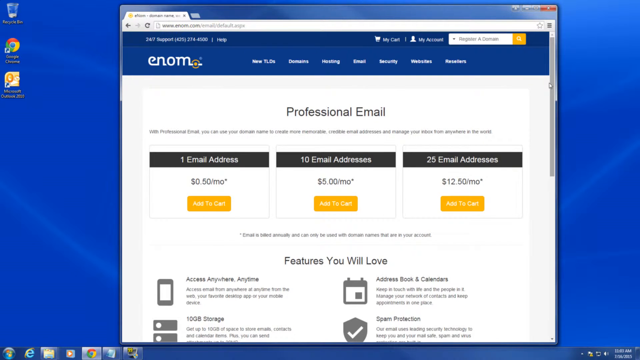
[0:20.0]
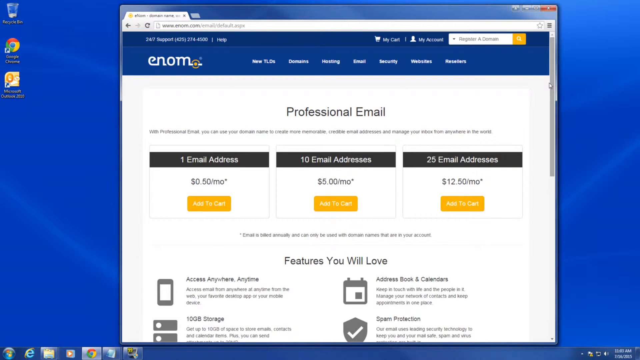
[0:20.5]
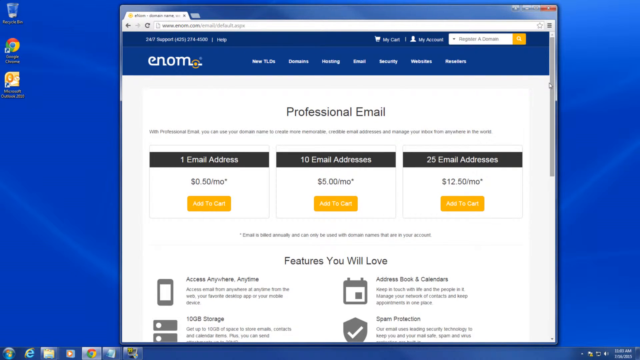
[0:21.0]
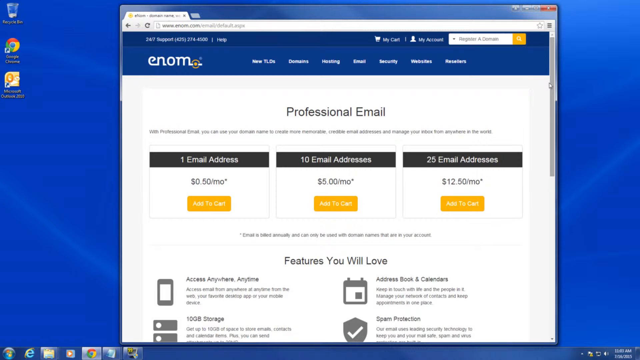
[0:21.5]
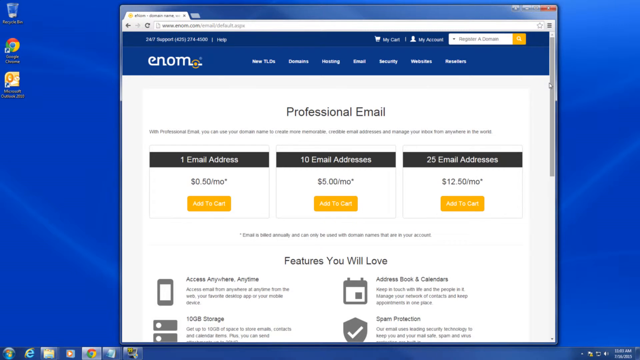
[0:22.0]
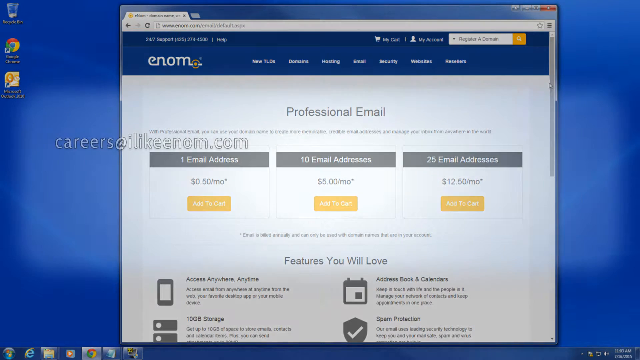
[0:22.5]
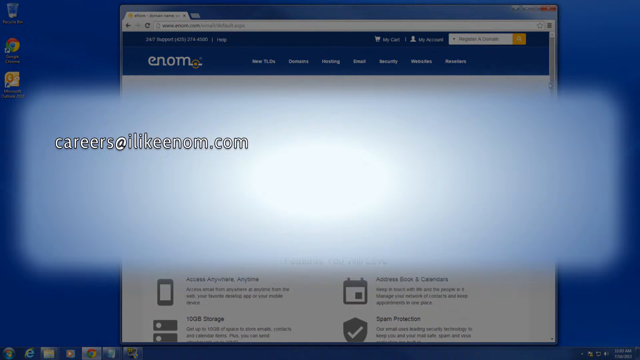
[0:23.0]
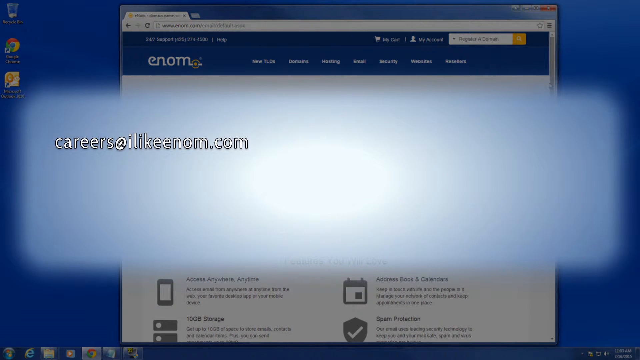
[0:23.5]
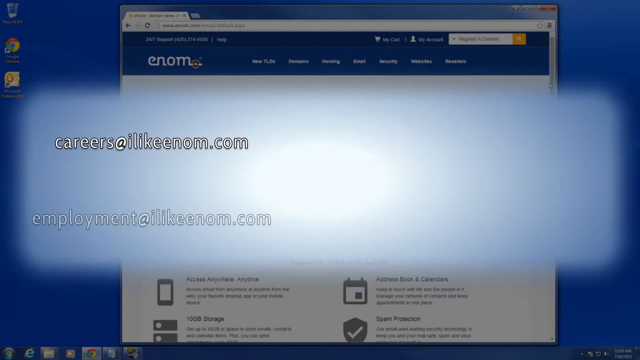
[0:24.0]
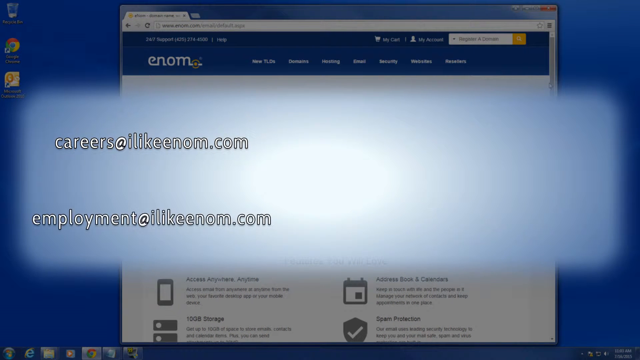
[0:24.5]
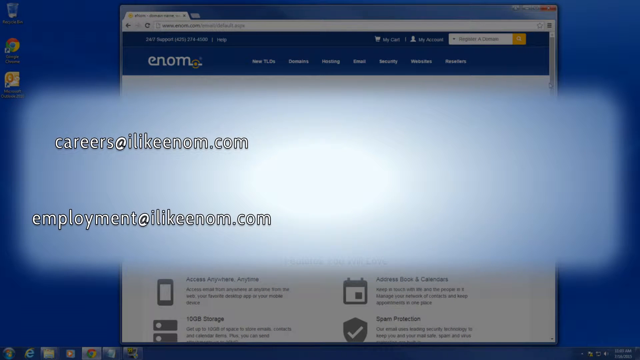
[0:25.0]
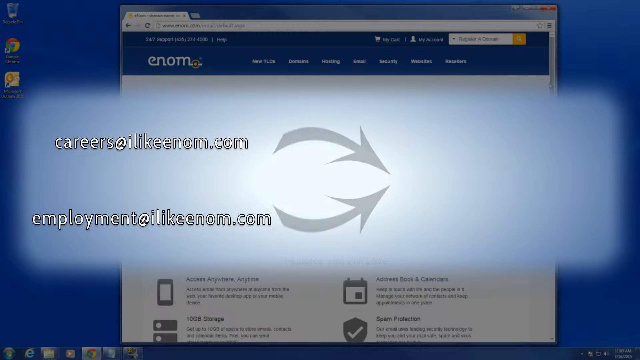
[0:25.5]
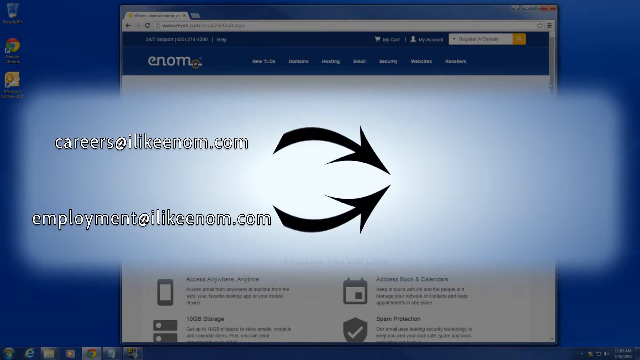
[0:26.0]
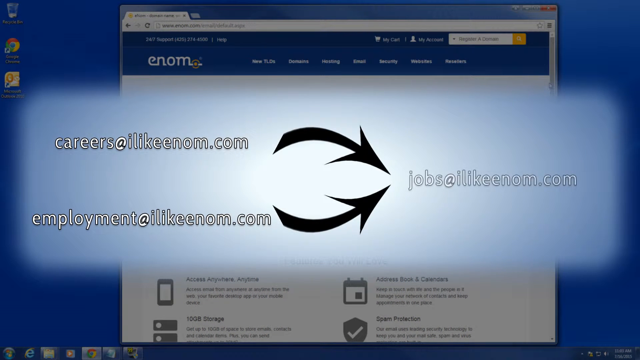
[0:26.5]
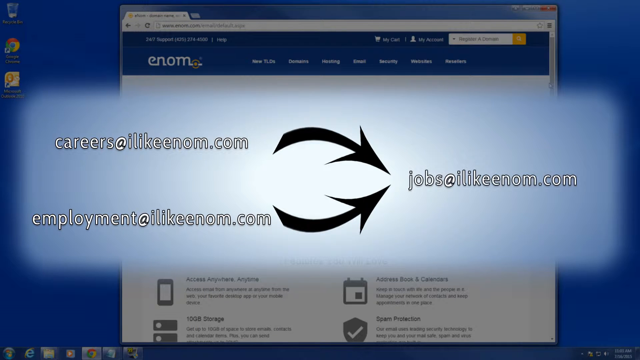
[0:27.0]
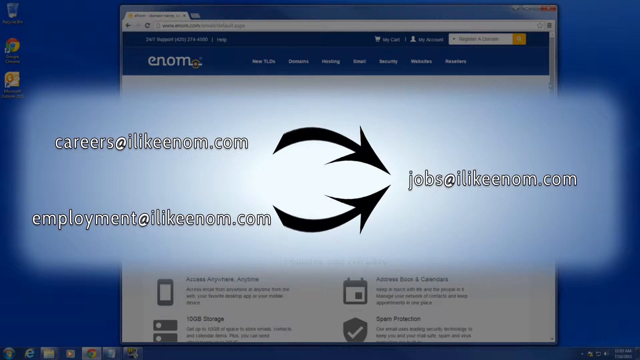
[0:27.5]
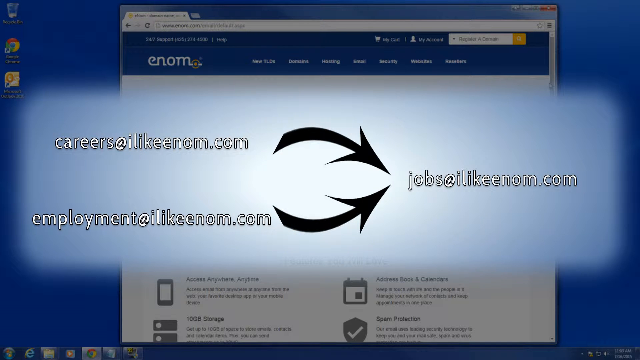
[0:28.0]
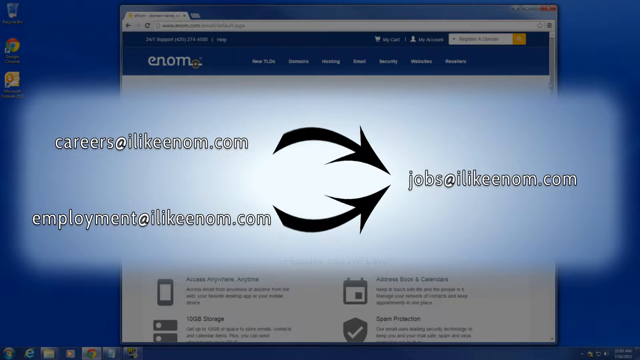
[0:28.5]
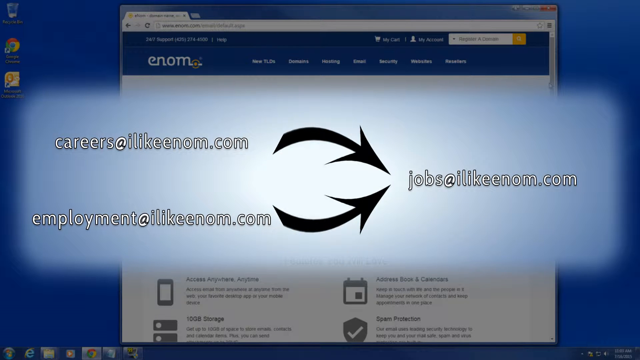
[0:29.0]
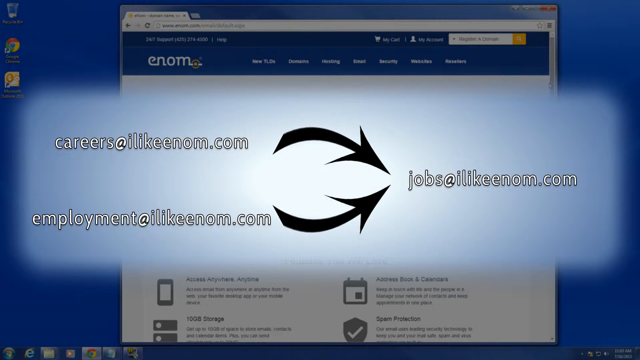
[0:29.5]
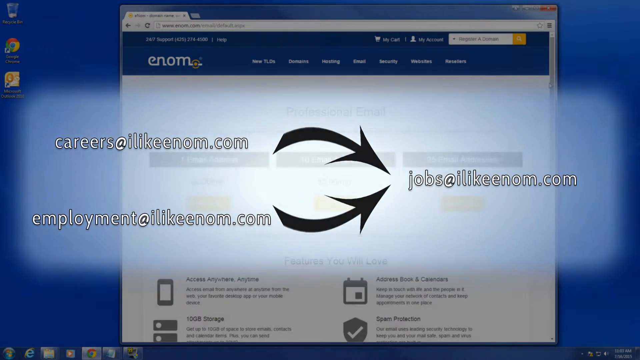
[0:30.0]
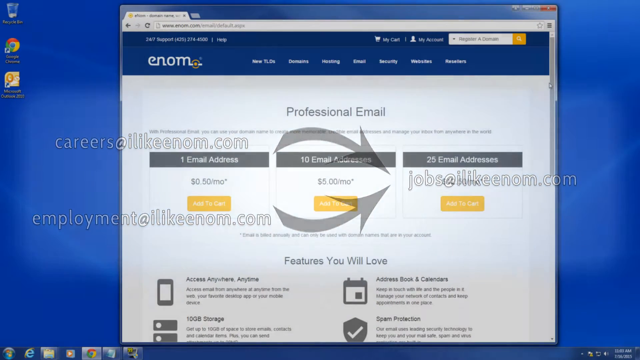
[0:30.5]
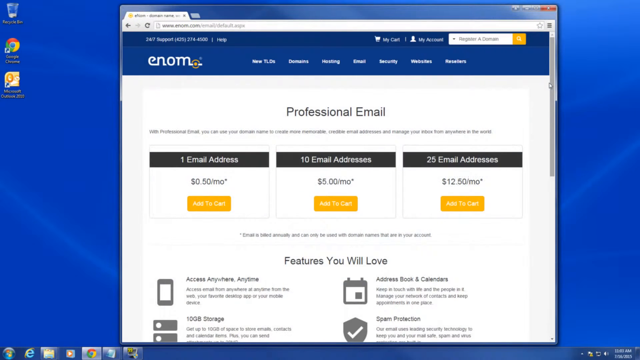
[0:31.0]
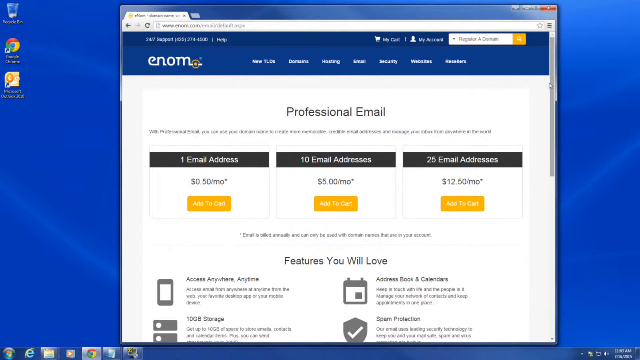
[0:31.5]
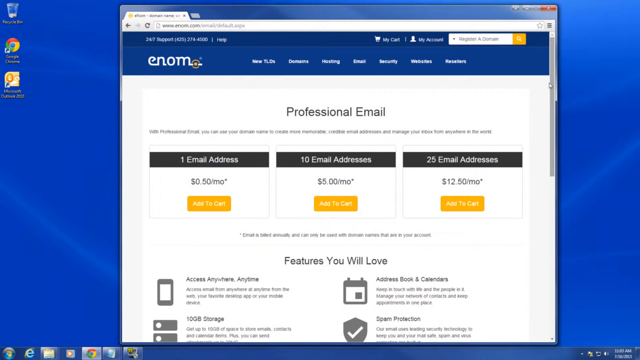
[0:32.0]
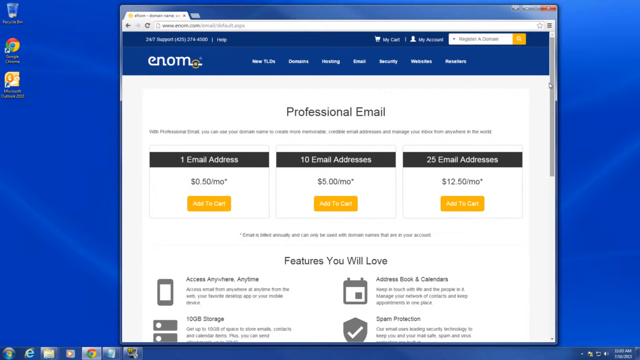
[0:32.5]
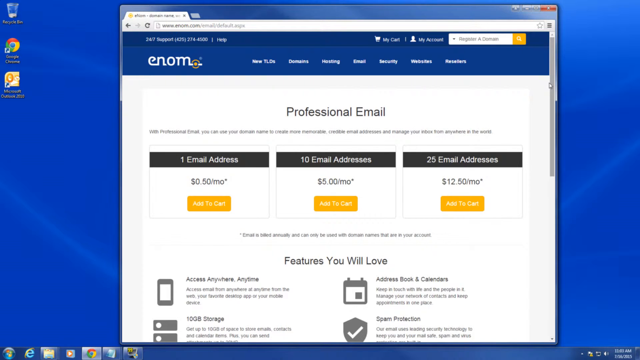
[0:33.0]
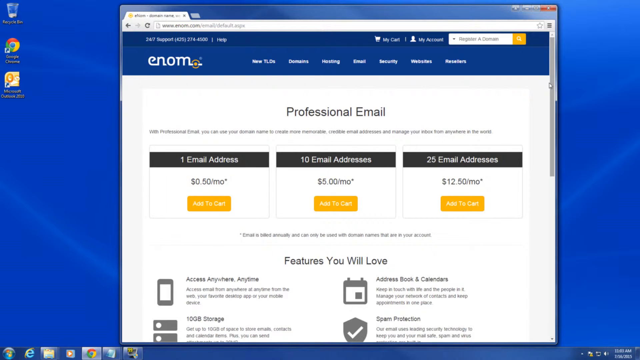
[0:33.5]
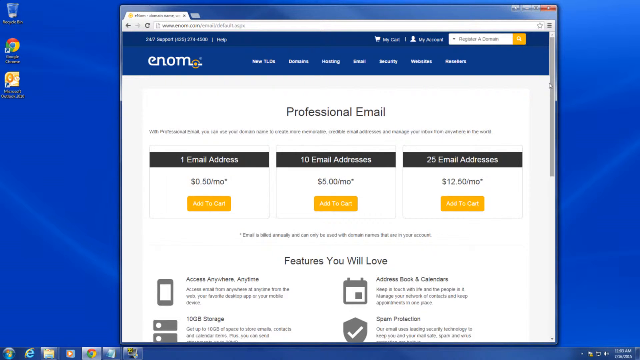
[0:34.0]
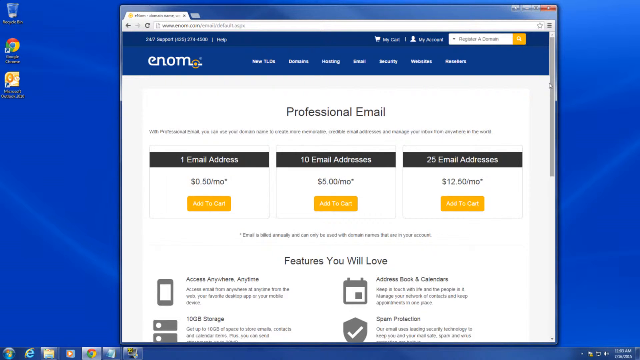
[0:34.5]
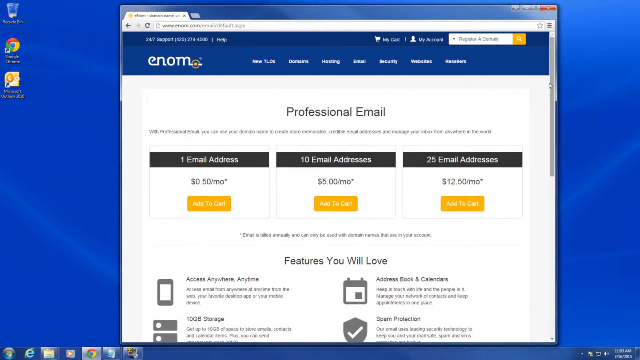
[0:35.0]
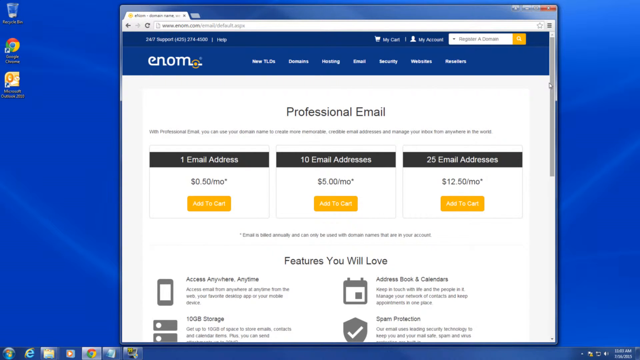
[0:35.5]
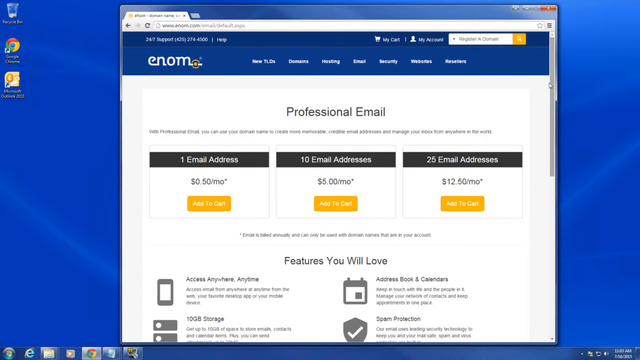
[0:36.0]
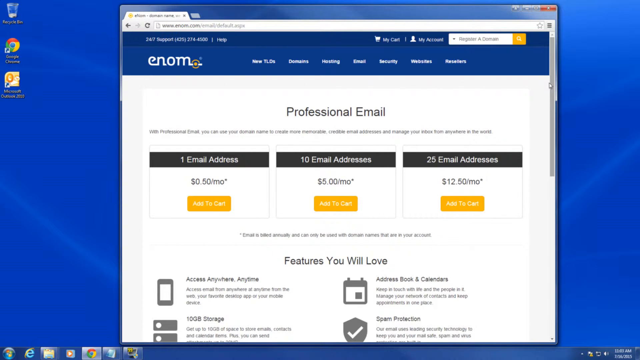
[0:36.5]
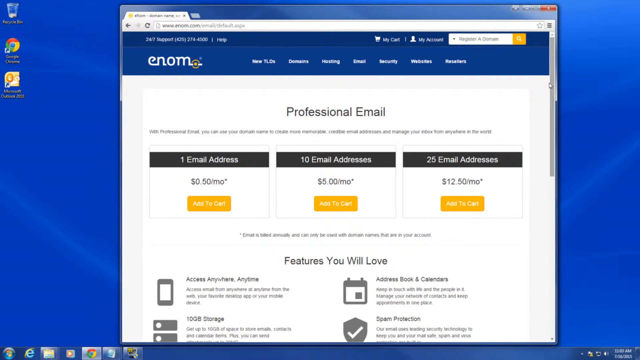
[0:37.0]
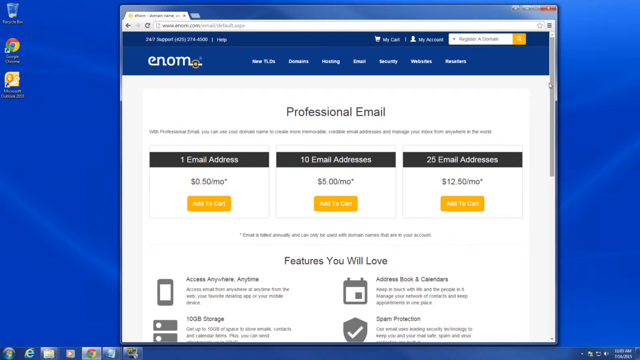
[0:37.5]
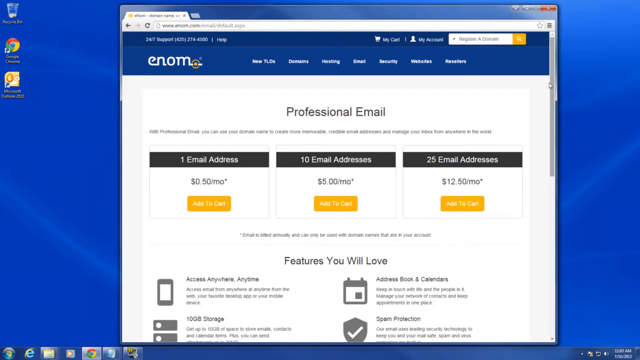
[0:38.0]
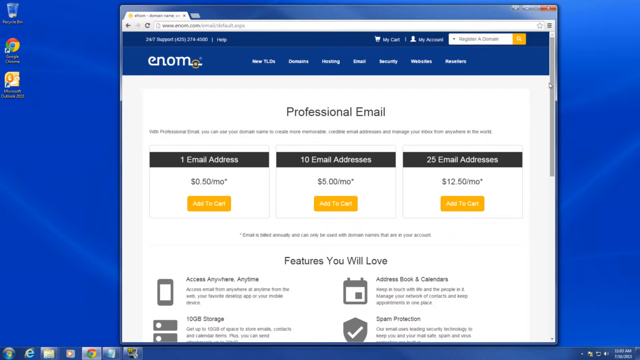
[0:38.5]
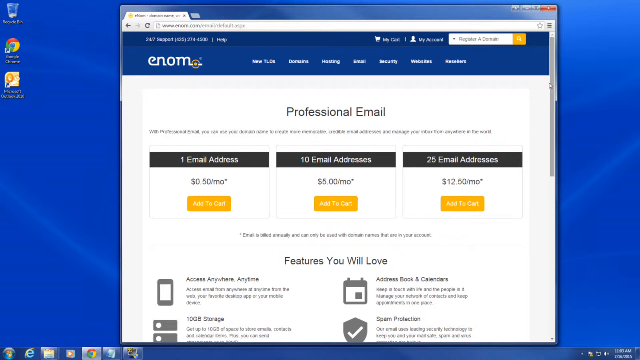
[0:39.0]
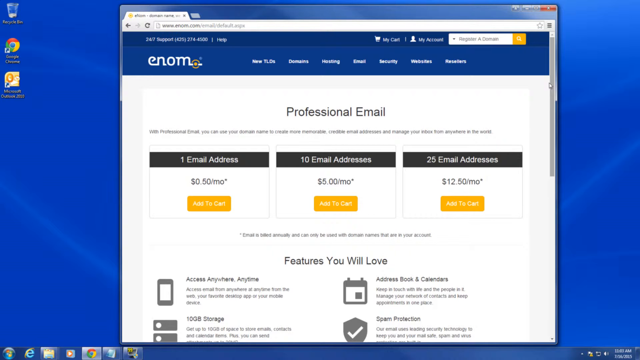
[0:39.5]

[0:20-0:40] A computer screen is pulled up with a dark blue background, and a website is open with "Enom" at the top. Some clickable options are listed beside it. Below that, on a white screen, it says "Professional Email," with boxes underneath. The first says "1 Email address" with a charge and an "Add to cart" yellow box. The next says "10 Email addresses" with a price and an "Add to cart" box, and the last says "25 Email addresses" with its price and an "Add to cart" button. The screen then changes, and what look like some email addresses pop up, with black arrows showing two email addresses going to one email address.